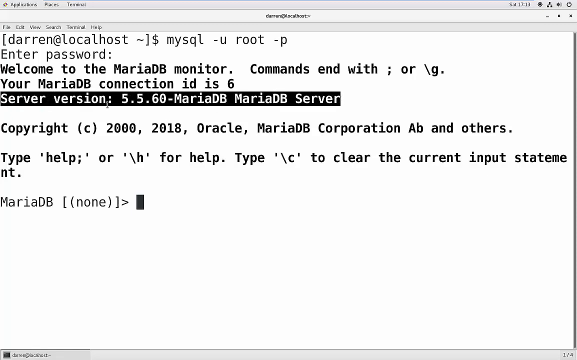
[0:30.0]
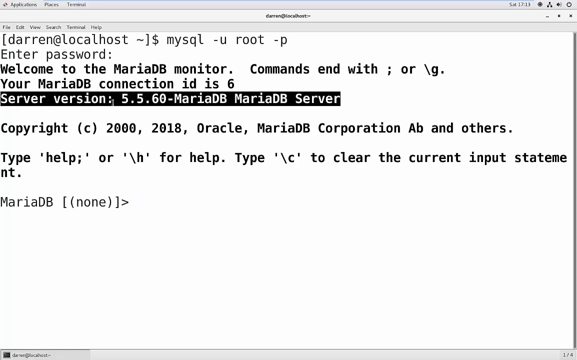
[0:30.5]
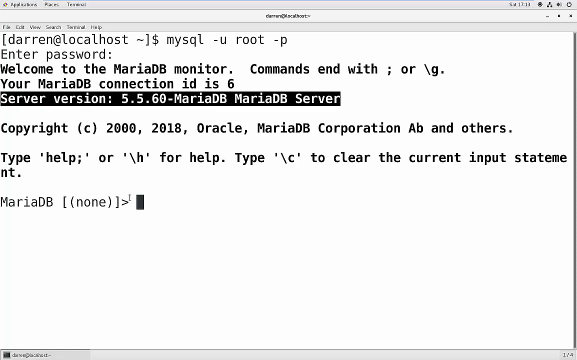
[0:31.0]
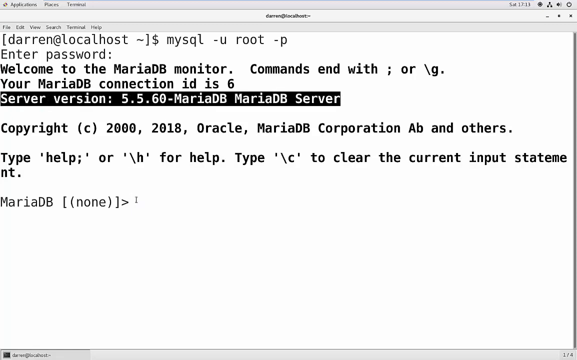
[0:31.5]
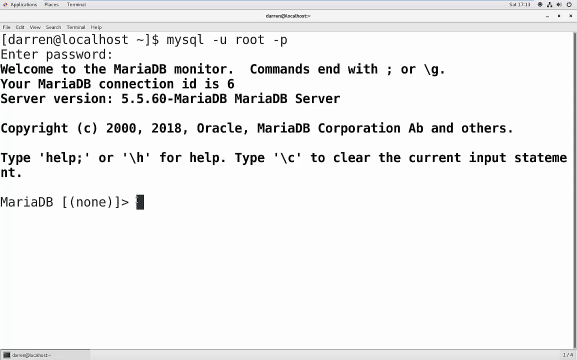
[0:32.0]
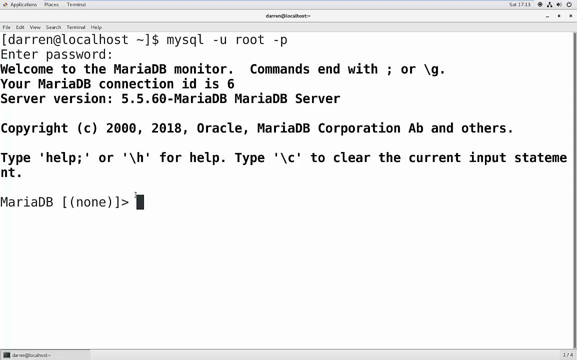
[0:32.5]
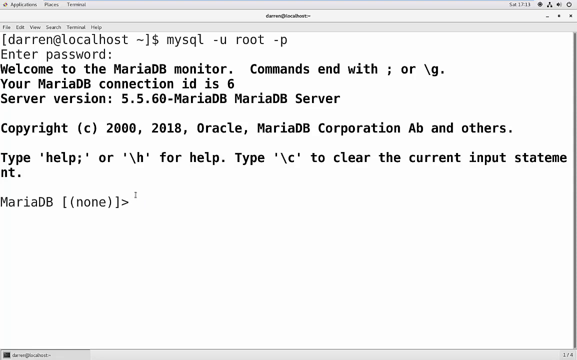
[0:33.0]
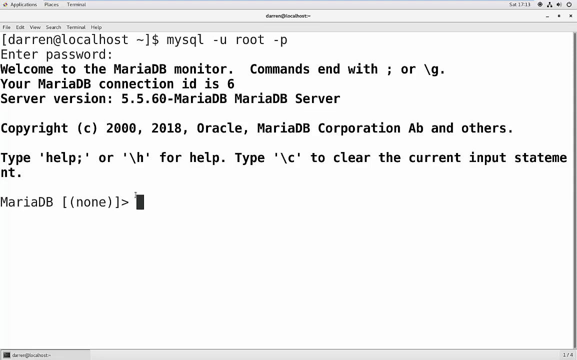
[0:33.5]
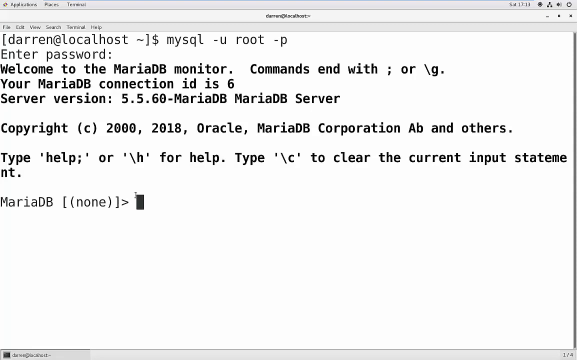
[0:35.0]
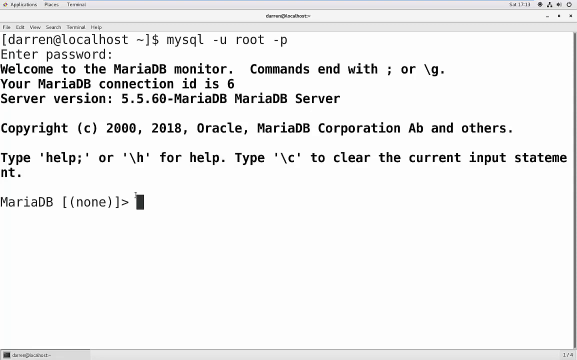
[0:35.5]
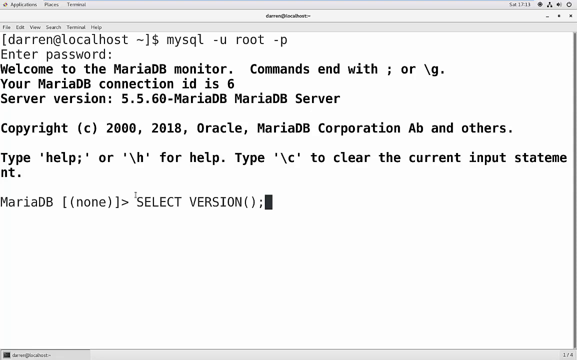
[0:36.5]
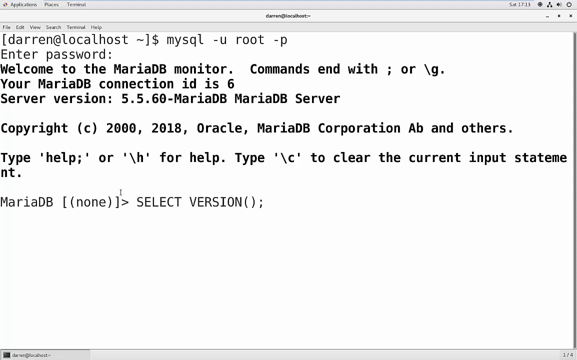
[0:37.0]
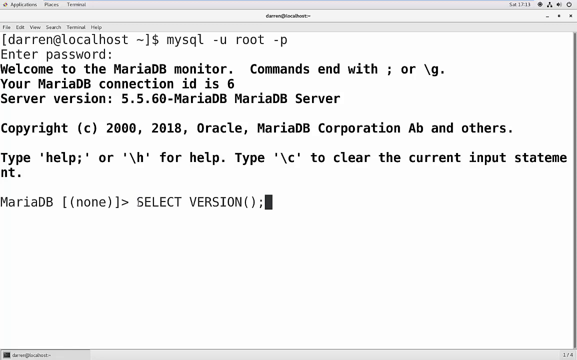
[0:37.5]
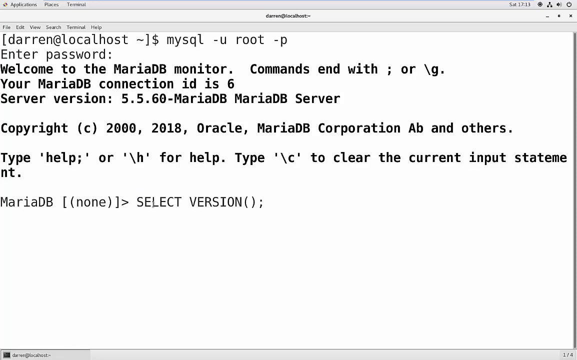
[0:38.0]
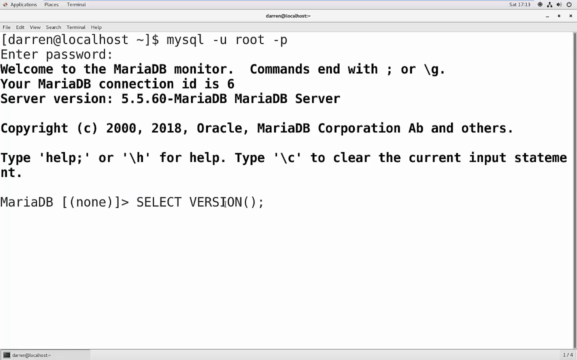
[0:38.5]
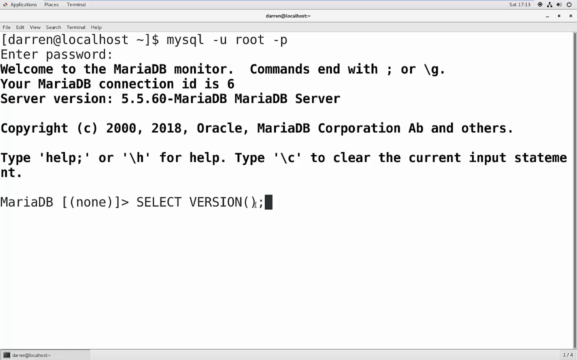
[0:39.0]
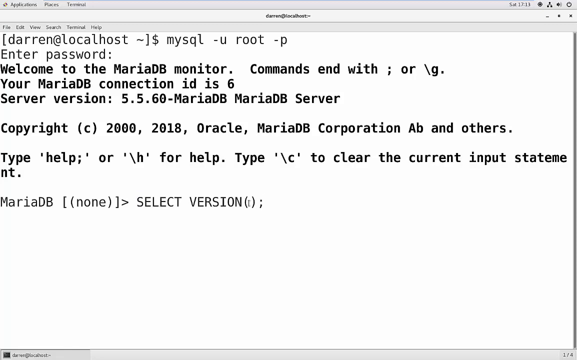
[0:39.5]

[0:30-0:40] He types in what is the root and finds that Maria is using a 5.5.0 server. A copyright from 2000 to 2018 is shown. The screen is still just a coding typeface with nothing else happening; inputs from both Darren and Maria appear on it.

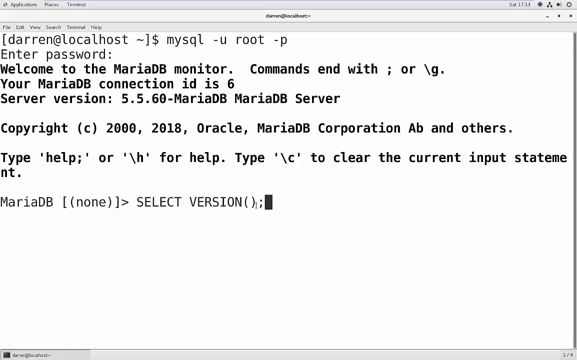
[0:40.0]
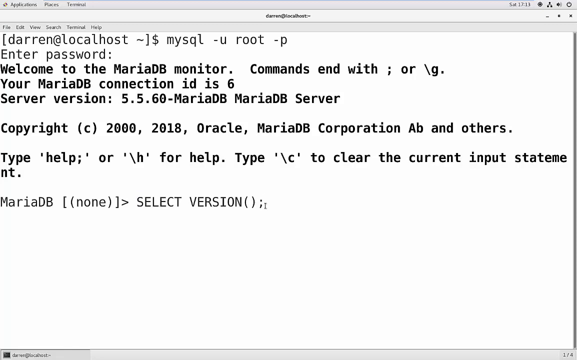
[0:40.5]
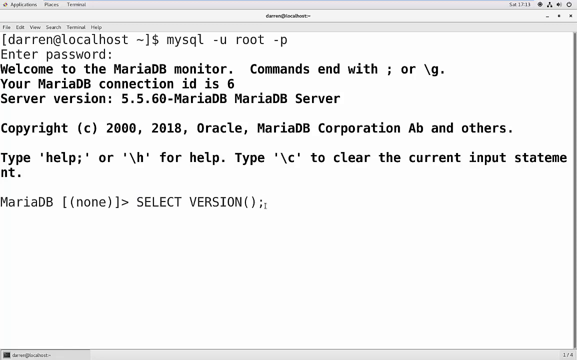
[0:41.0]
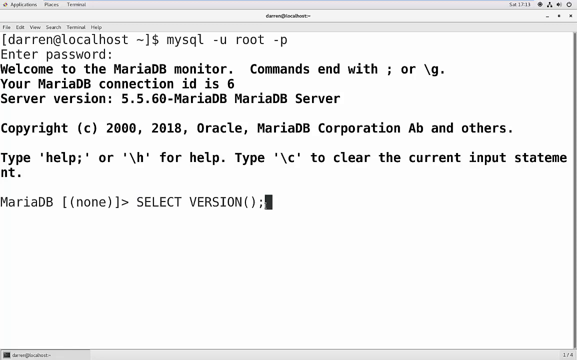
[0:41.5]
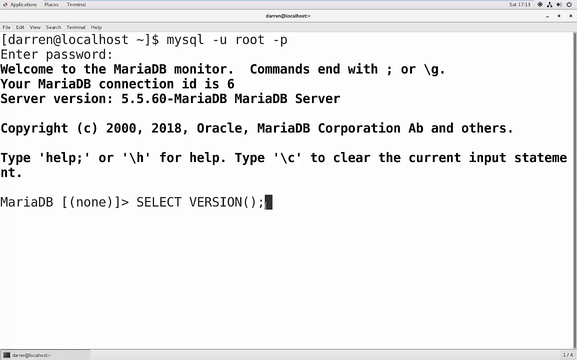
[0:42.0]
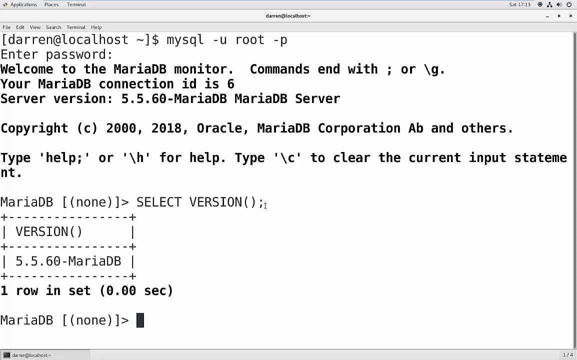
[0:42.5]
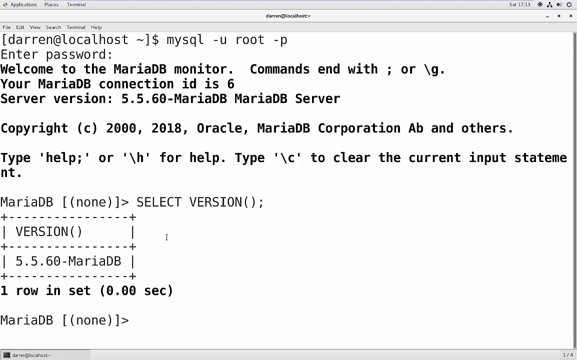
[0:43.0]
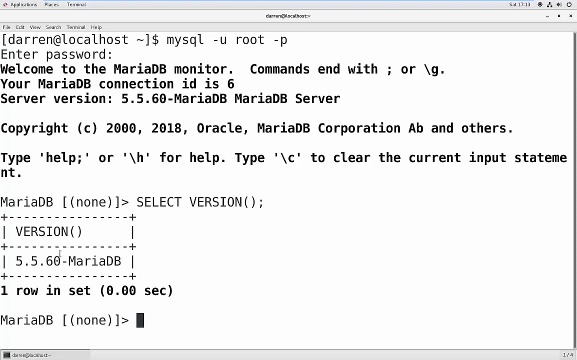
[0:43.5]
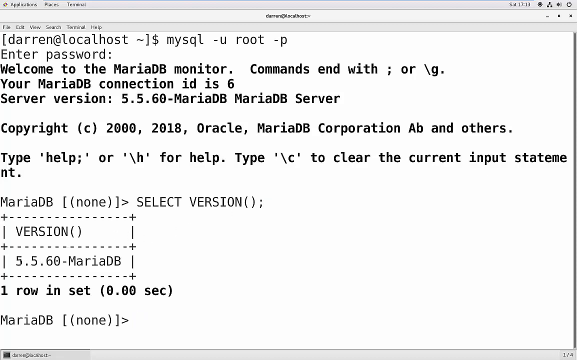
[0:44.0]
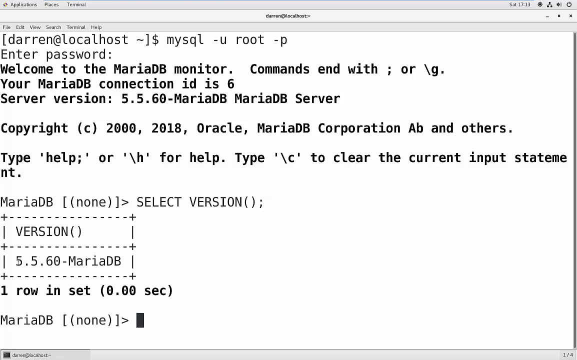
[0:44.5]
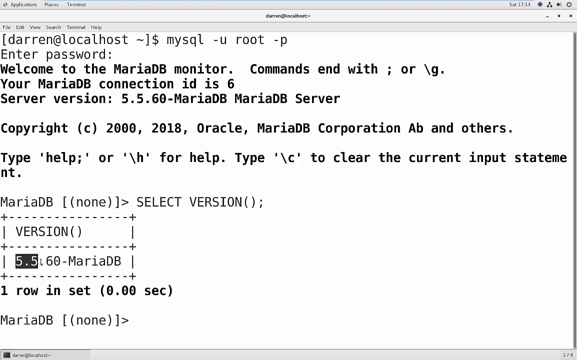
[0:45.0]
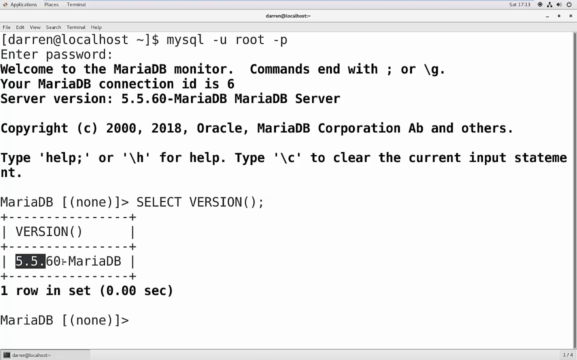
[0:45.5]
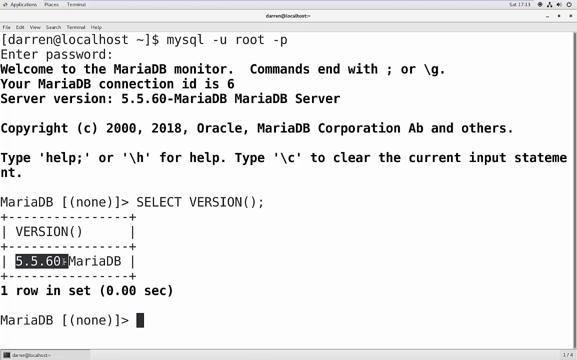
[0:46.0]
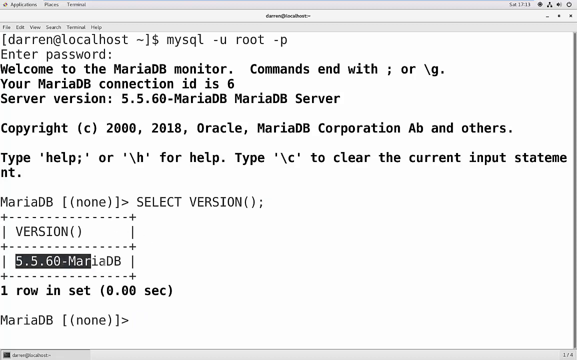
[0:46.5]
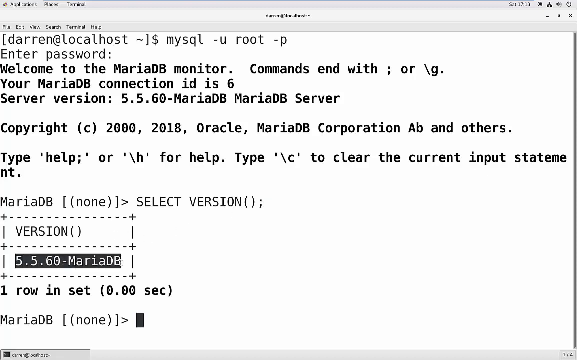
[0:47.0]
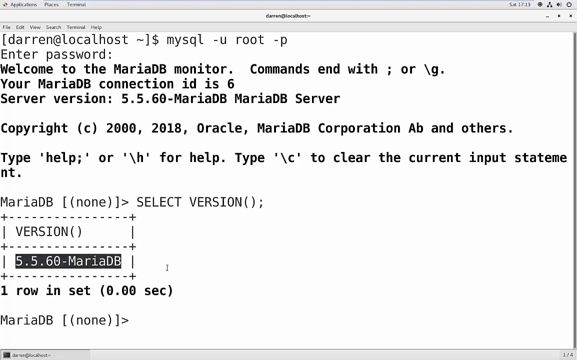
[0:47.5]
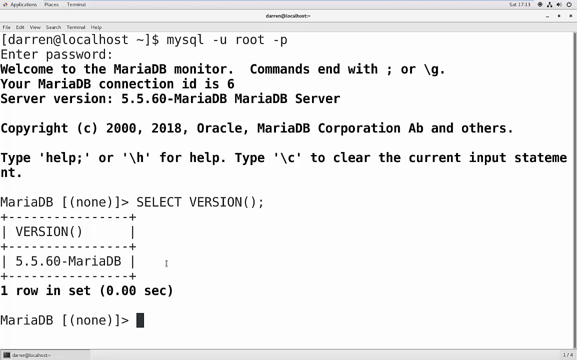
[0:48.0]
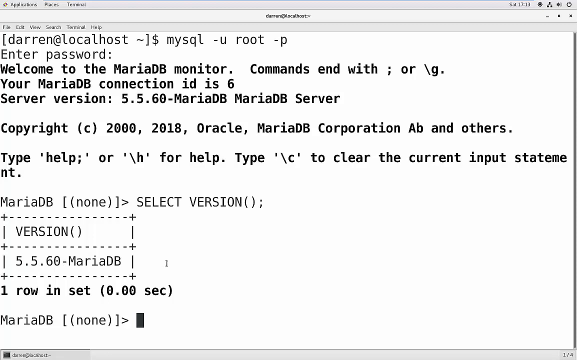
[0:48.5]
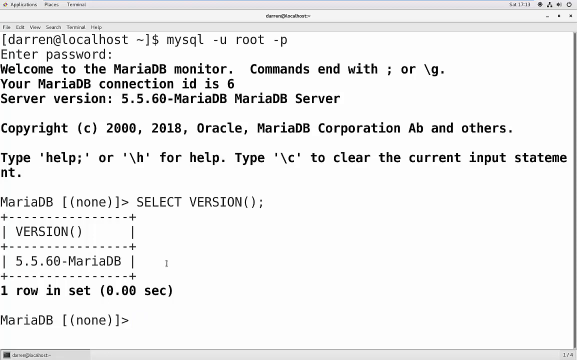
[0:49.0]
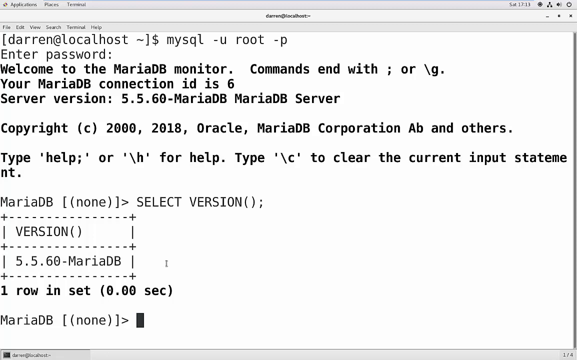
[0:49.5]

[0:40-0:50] Maria is entered and the version of her server is selected: 5.5.60 MariaDB. When this is put in, a grid appears, showing the same information, that the server version is 5.5.60. The screen is still a text space at Darren's localhost server, still accessing Maria's information.